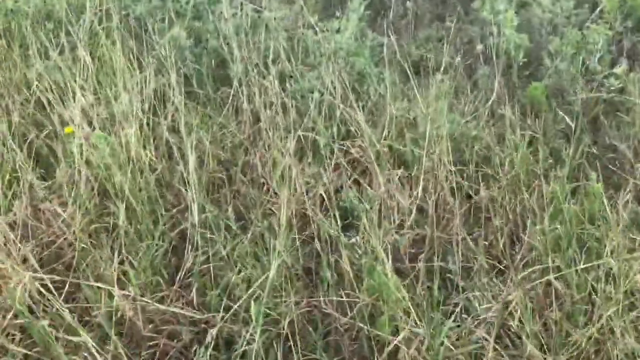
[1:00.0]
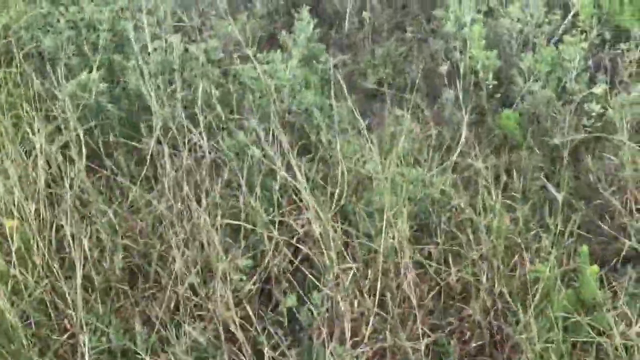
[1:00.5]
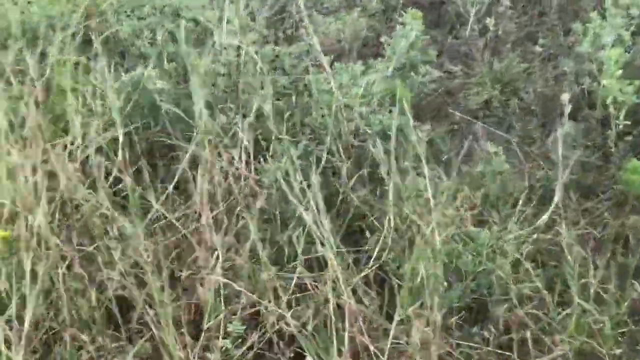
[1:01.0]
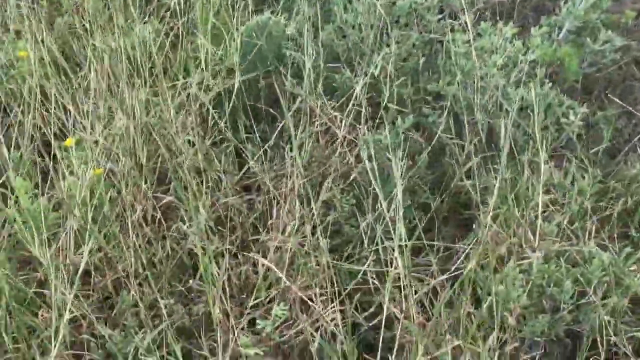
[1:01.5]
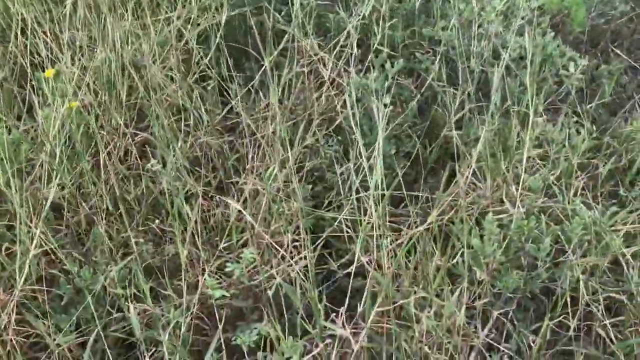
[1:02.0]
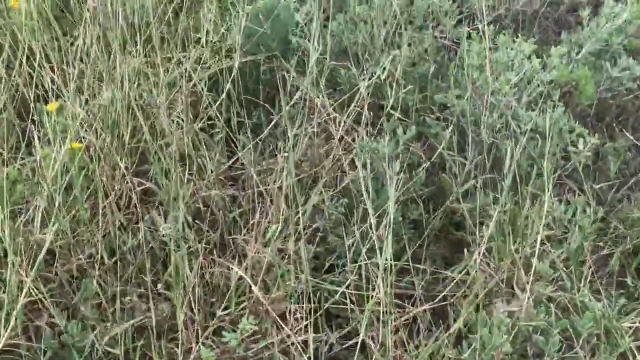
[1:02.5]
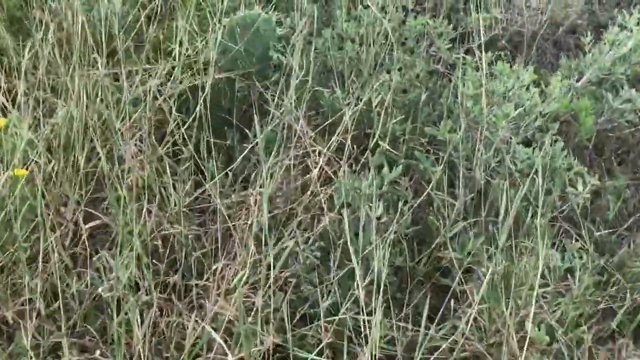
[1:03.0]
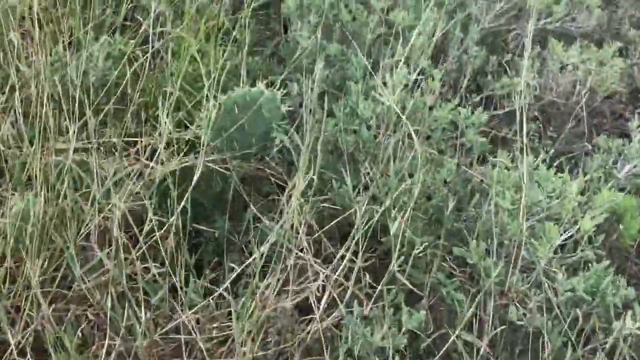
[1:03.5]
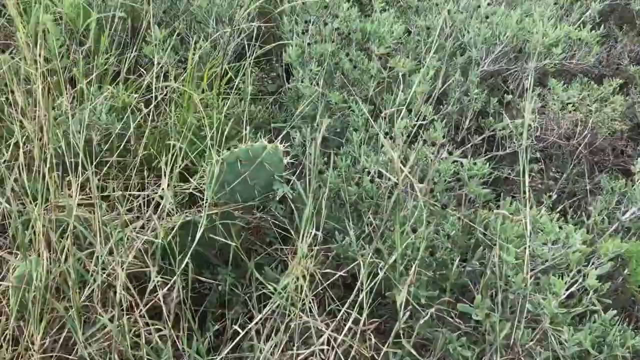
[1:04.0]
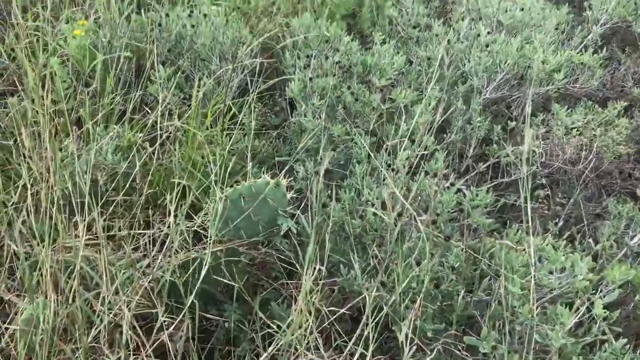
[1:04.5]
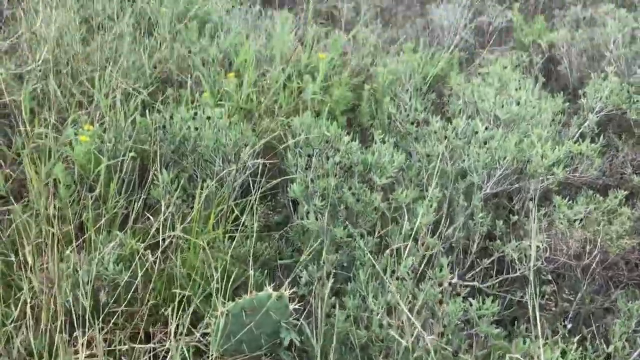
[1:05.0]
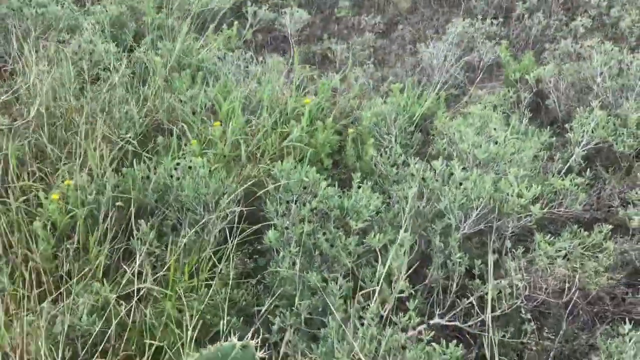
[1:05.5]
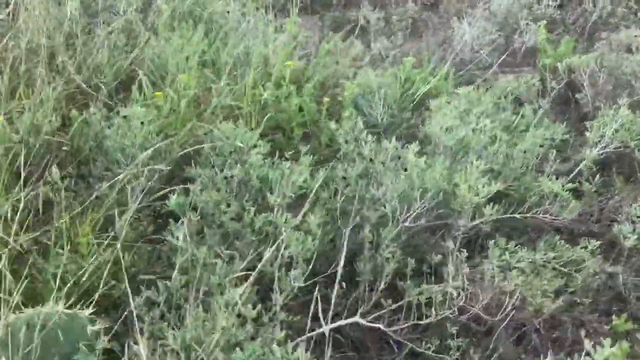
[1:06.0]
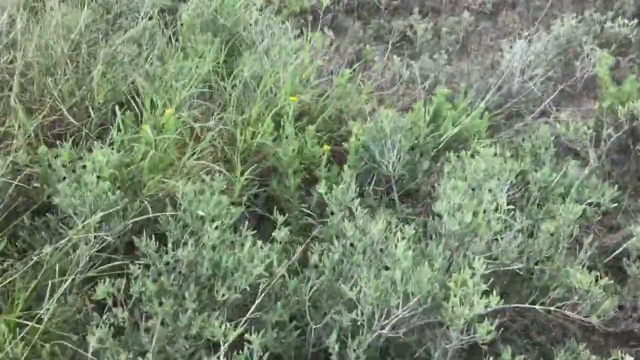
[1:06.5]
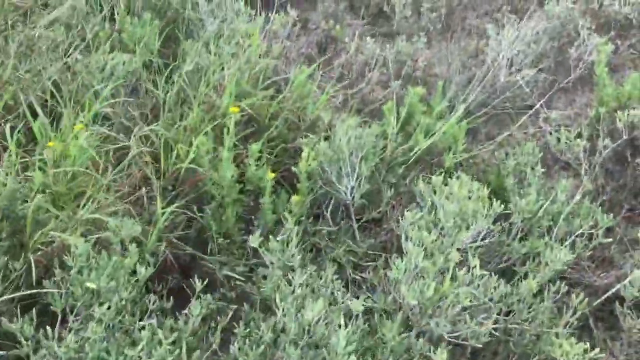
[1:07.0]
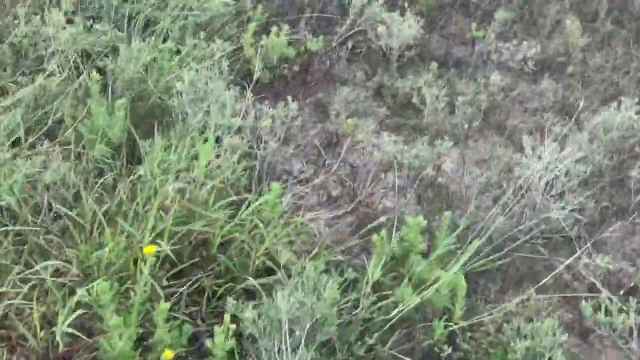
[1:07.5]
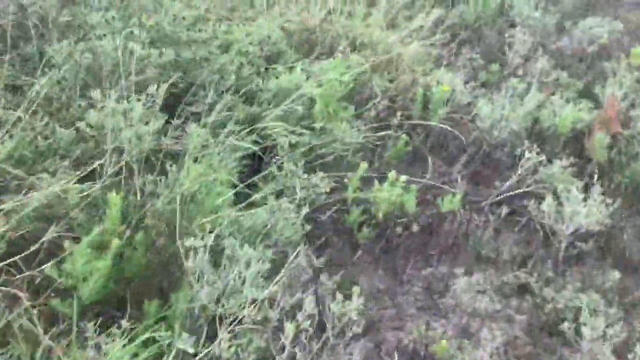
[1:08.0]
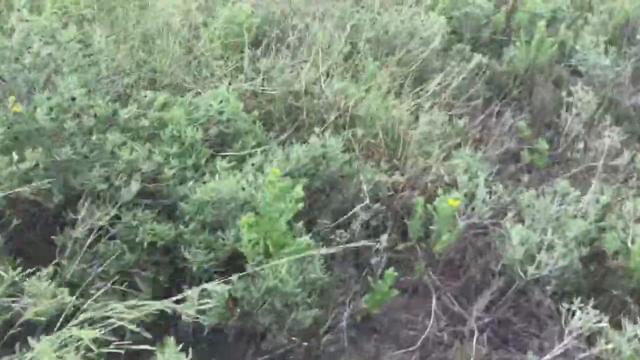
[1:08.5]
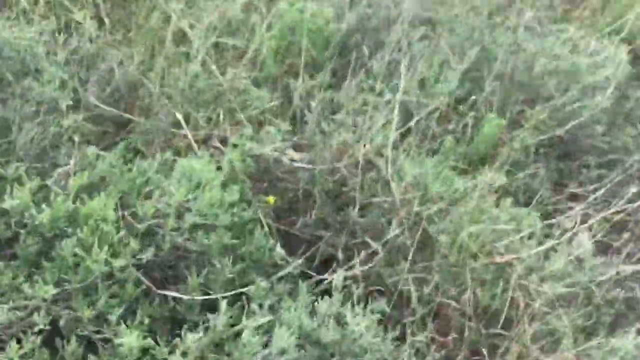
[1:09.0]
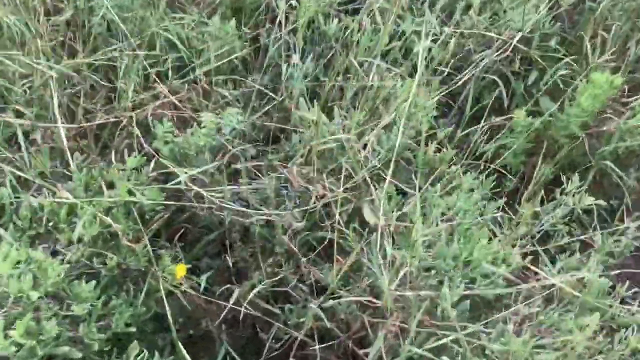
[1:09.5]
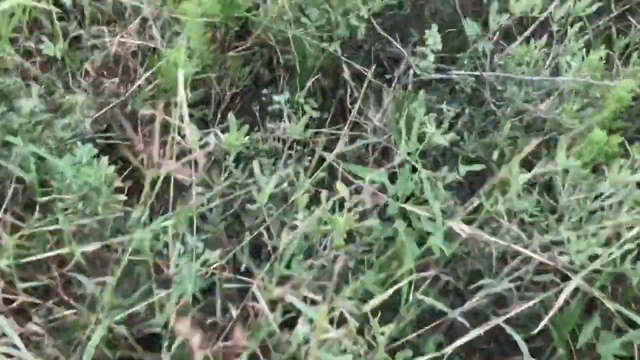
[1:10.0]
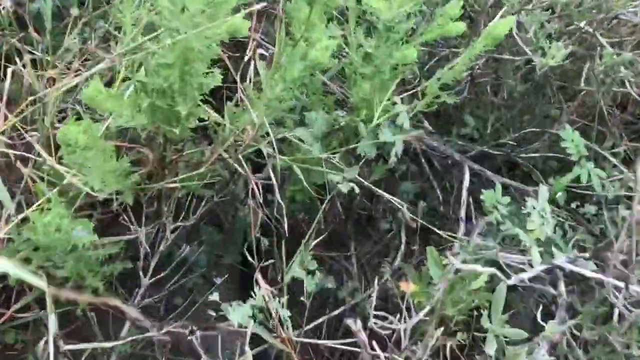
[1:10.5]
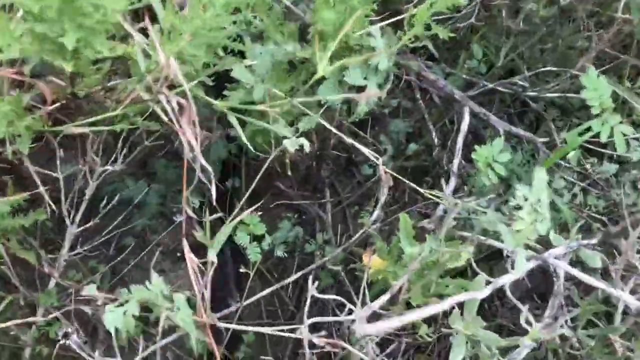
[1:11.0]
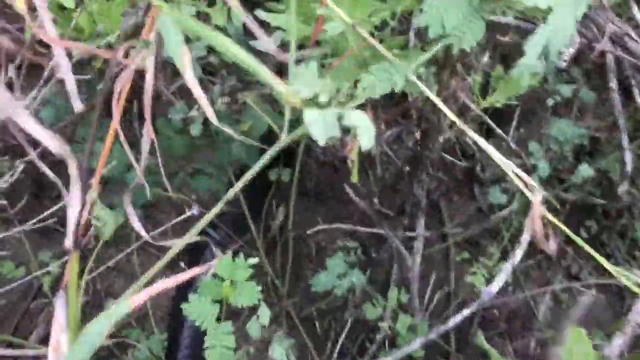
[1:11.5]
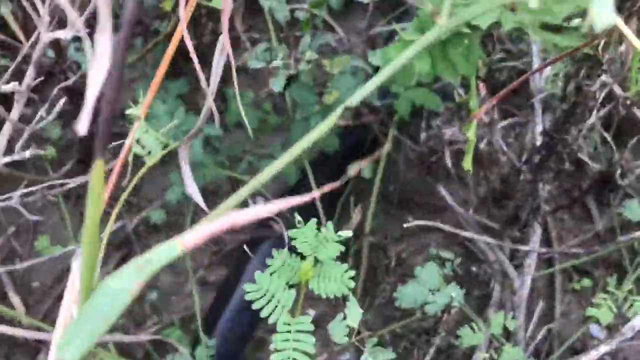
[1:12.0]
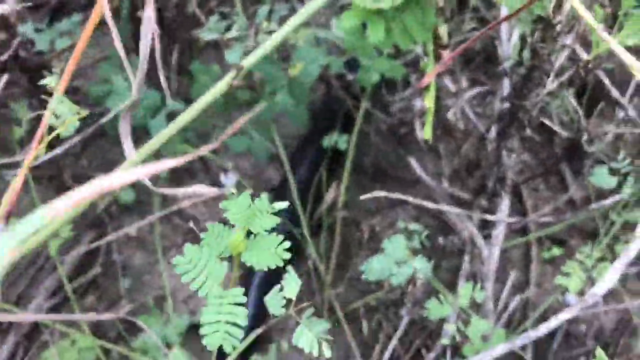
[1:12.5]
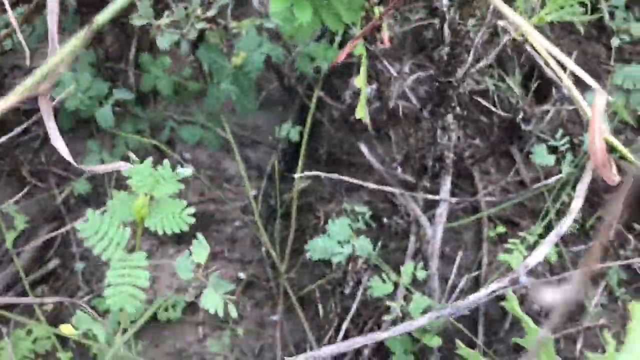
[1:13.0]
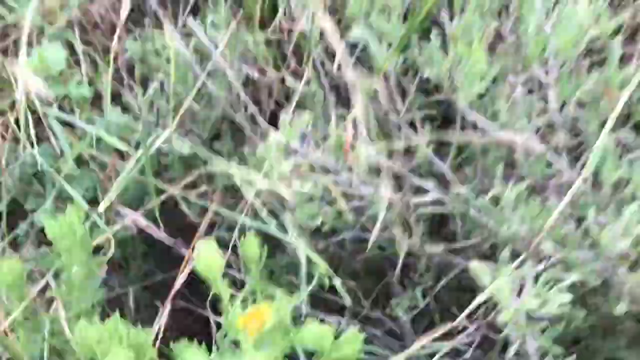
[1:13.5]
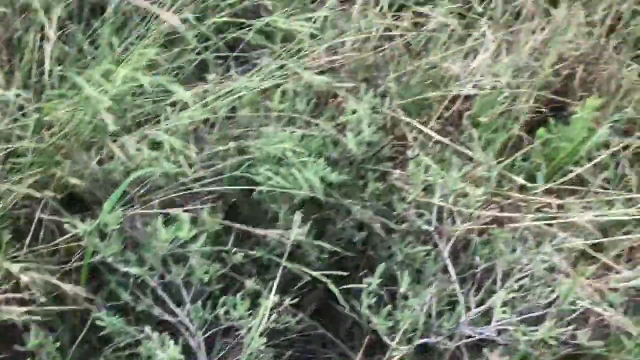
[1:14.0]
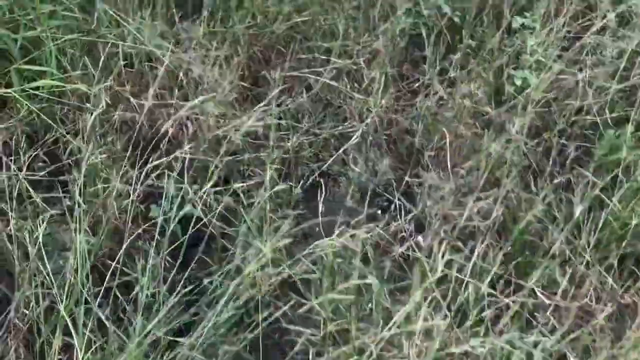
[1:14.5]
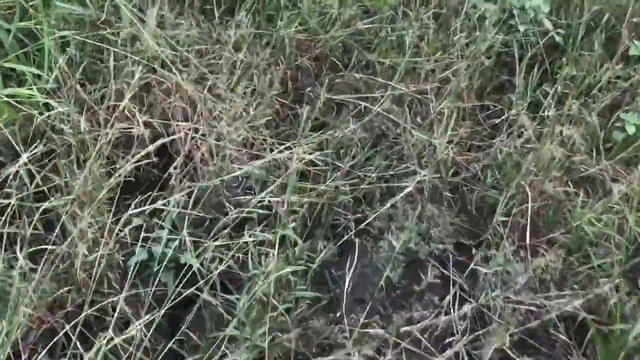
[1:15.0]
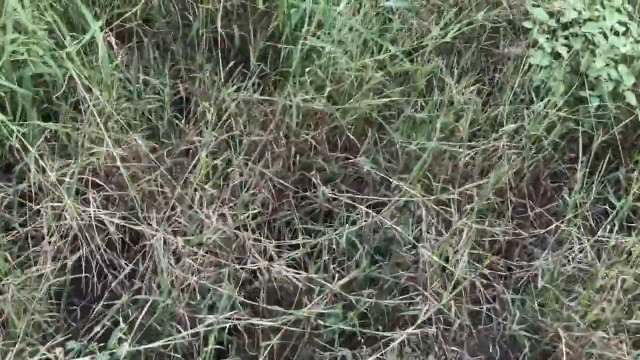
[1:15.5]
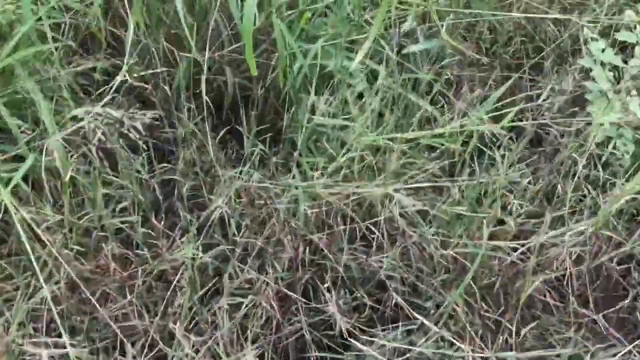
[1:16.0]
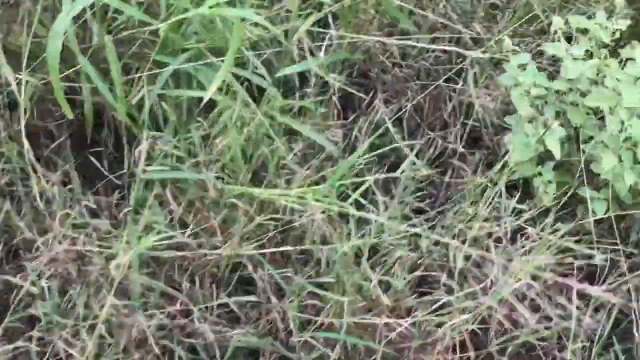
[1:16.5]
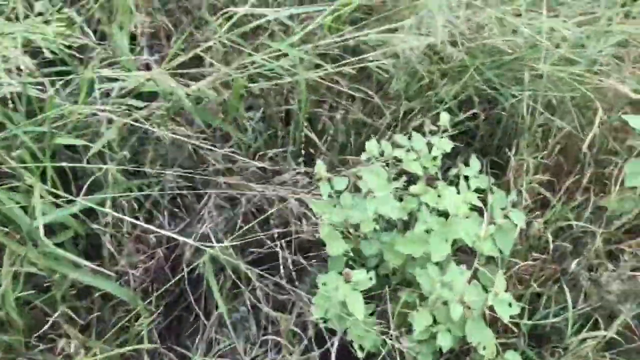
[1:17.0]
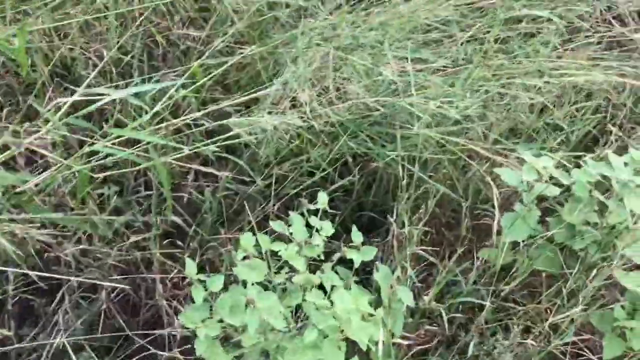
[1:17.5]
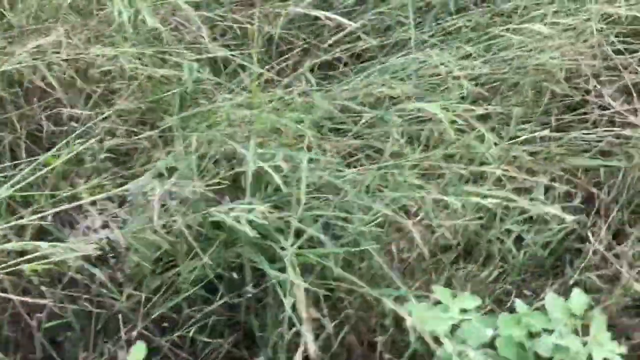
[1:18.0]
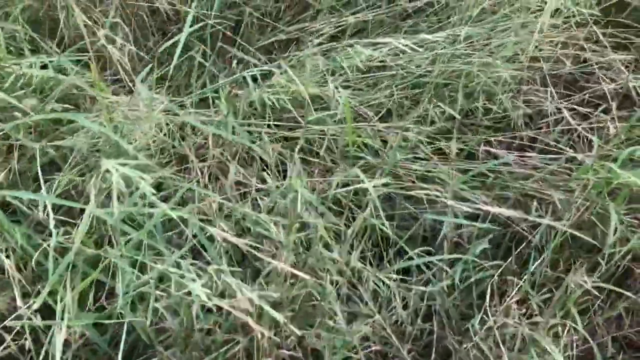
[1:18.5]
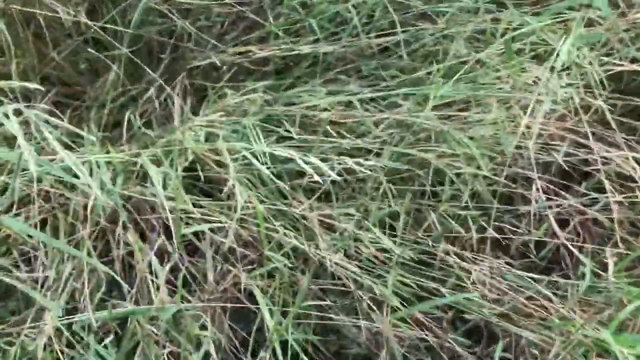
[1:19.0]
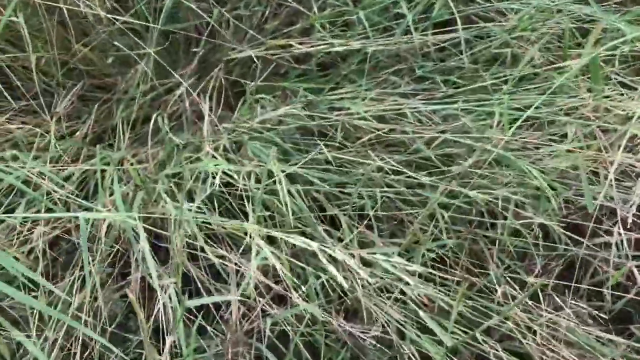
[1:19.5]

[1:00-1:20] The snake is out of sight in the grass as the camera pans over tall growth that is partly brown and graying and partly green. The kid with the camera seems to have a good eye on the snake: after moving quite a few feet forward at a good pace, he keeps up with it, pans in between the blades of grass, and slowly moves in to catch a glimpse of the snake's tail. Most of what is seen is the camera panning over really tall green and gray grass.